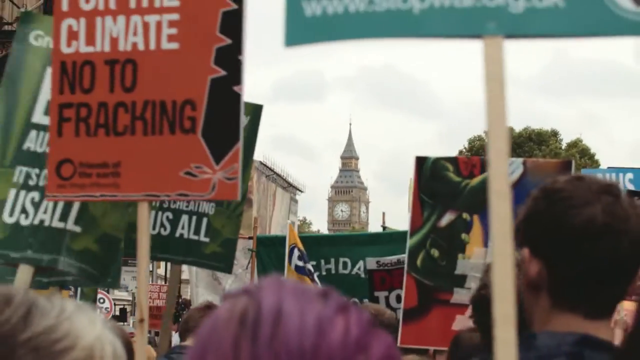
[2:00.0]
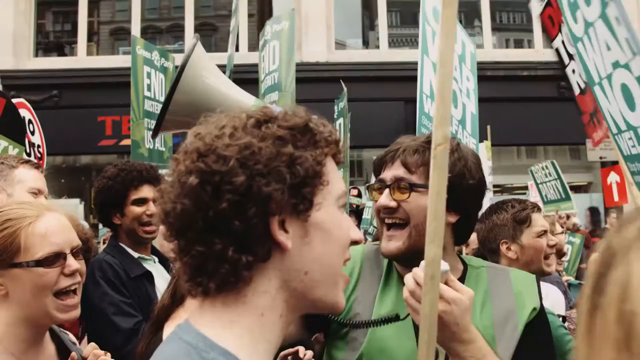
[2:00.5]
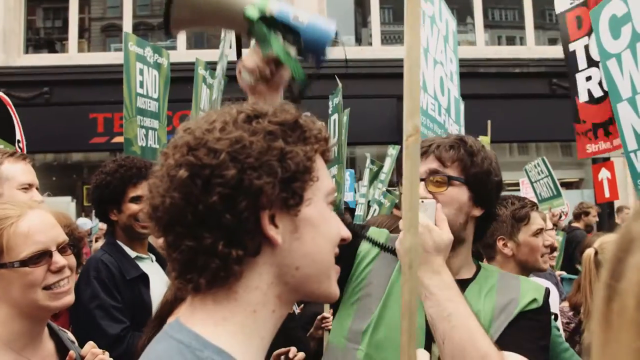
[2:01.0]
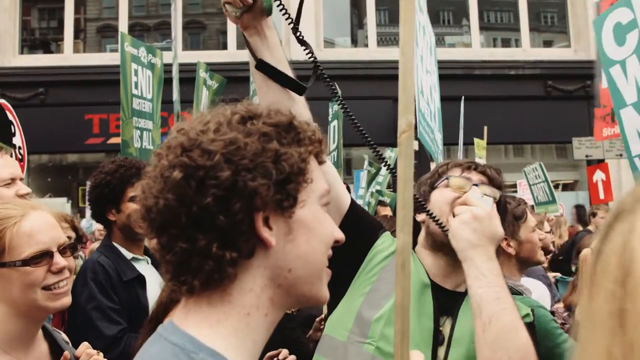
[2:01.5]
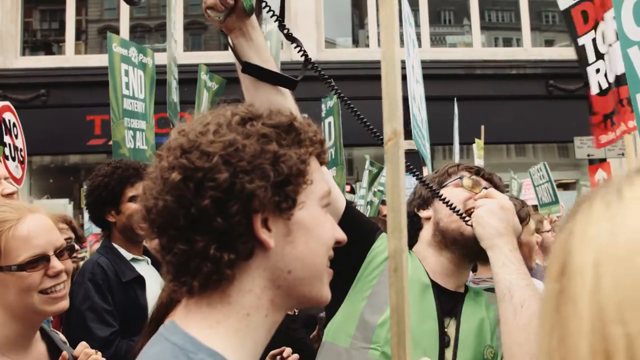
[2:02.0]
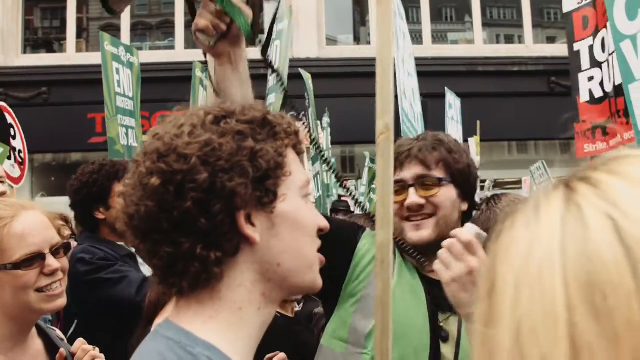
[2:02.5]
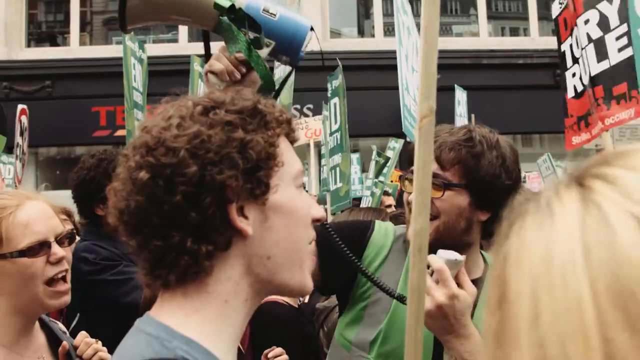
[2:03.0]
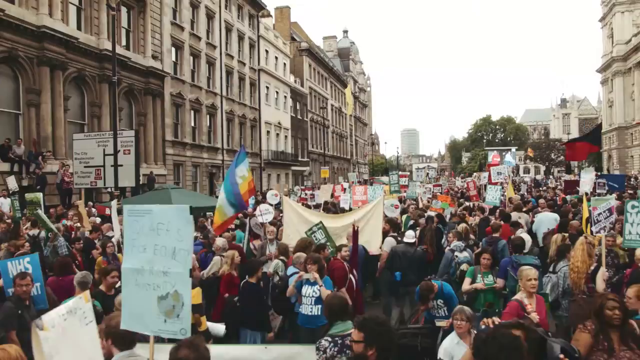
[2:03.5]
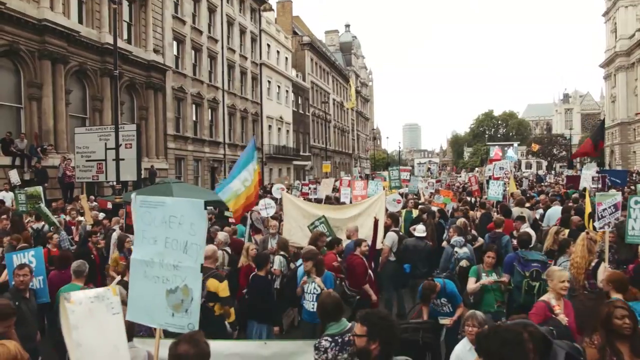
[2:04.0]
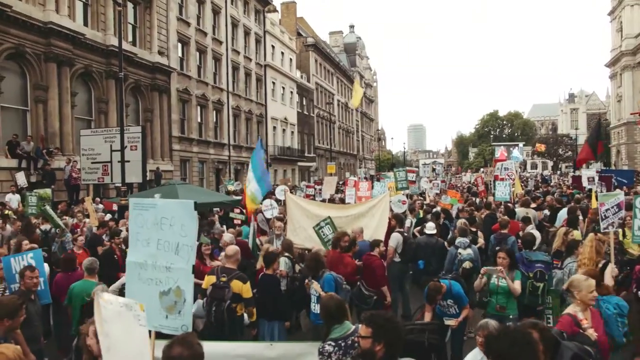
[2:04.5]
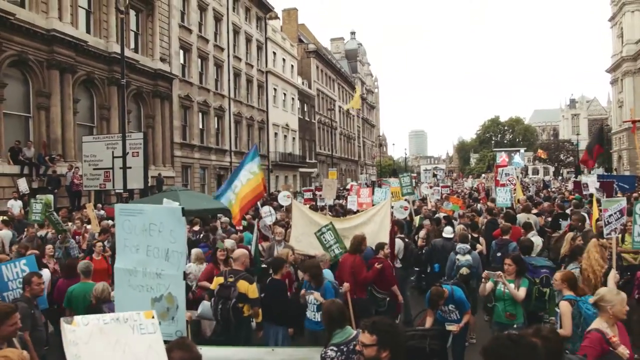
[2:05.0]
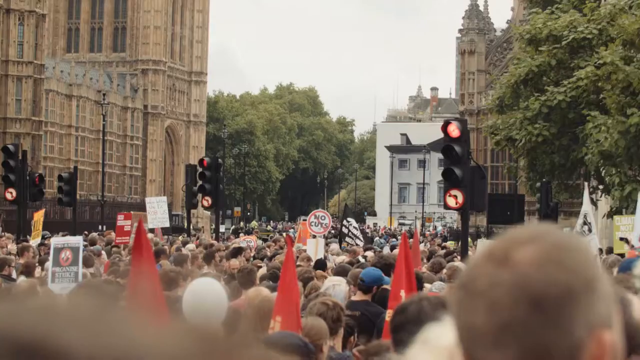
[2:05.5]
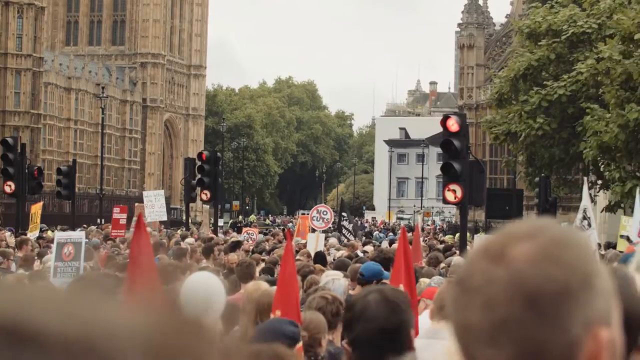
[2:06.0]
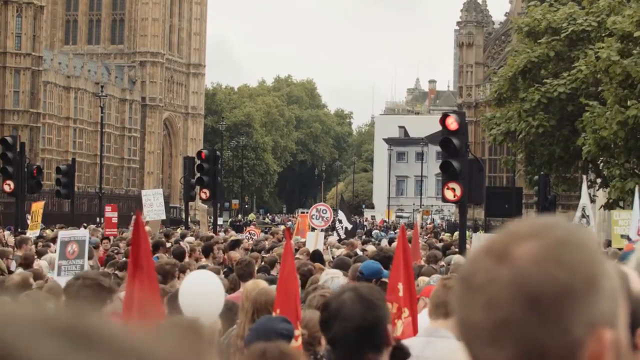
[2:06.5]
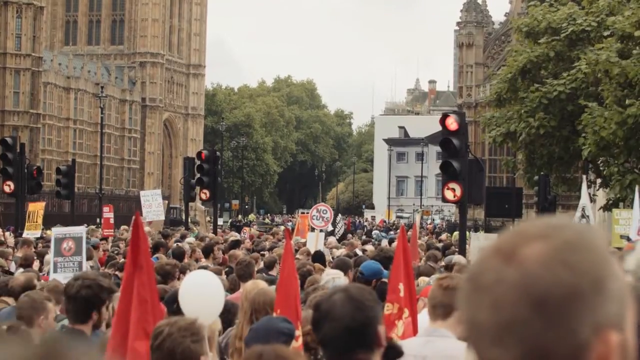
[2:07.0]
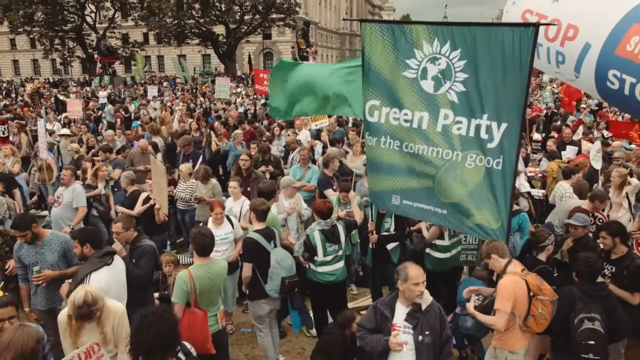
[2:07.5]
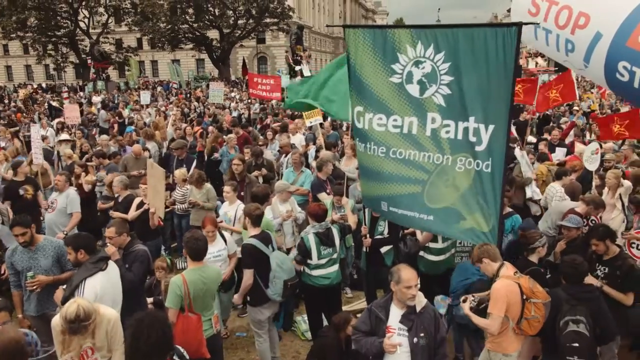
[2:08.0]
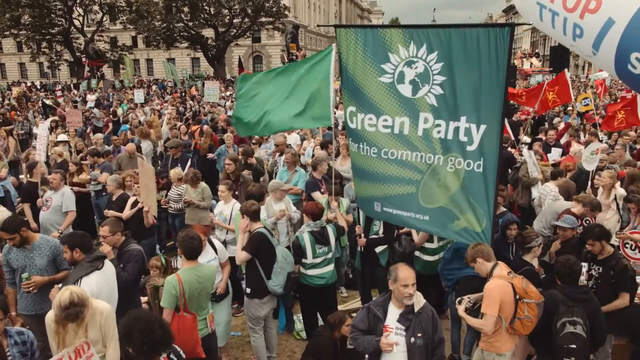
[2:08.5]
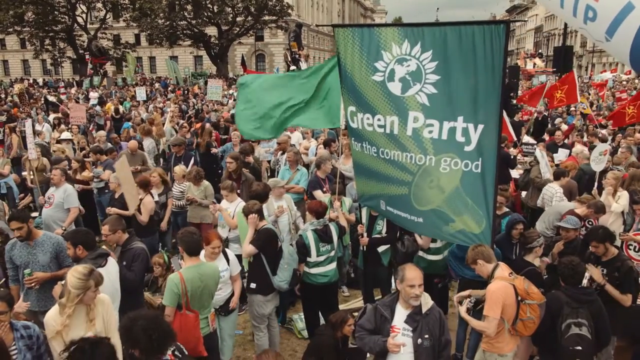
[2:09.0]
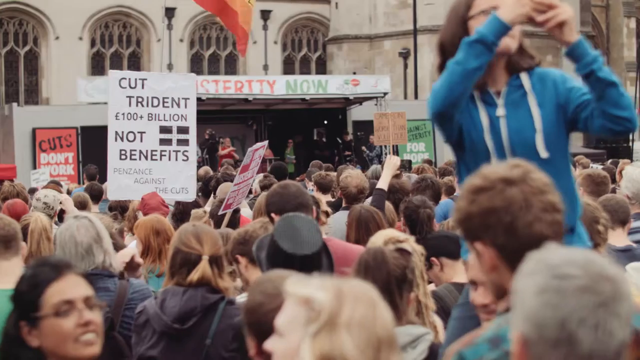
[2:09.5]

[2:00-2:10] The protesters hold quite a few red cards, one of them about climate and fracking, along with Green Party cards reading "end austerity, it is cheating us all" in white font on a green background. Big Ben, the clock tower, is in the background. The skies are clear. A man holding a bullhorn of some sort motions to the crowd, probably encouraging them to be louder; he wears prescription glasses and has neat hair. Another Caucasian man closer to the foreground has curly brown hair, and just behind him is a Caucasian woman with dark-framed prescription glasses and blonde hair. Close to her is a man with darker skin and curly black hair, possibly African American, Indian or Middle Eastern. Behind him is a building at least two stories high whose name is obscured by the many cards held by the protesters; it apparently reads Tesco, possibly a local grocery outlet. One protester has a multicolored flag with blue on top, followed by white, yellow and red; it is not a pride flag. Some cards read "NHS." Most people wear red, green, light blue or navy blue, and old-world architecture lines the street.